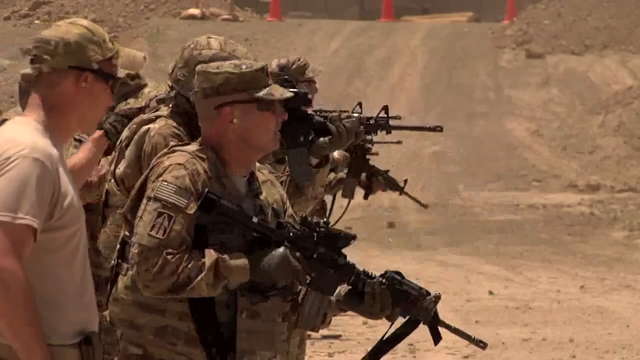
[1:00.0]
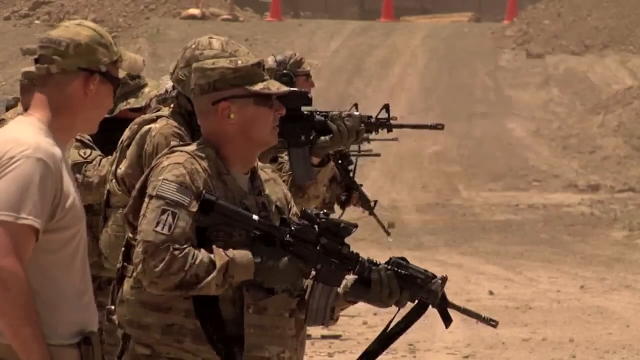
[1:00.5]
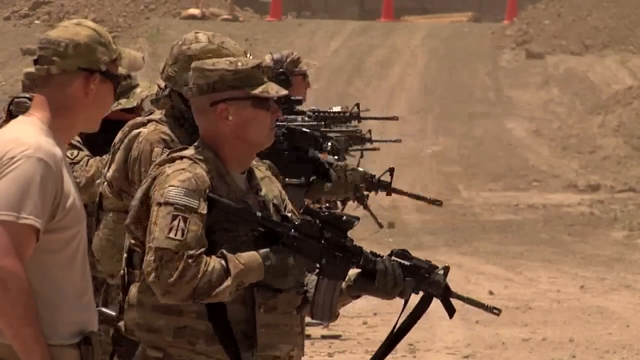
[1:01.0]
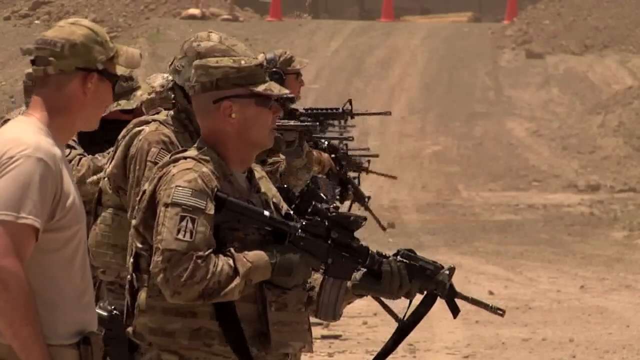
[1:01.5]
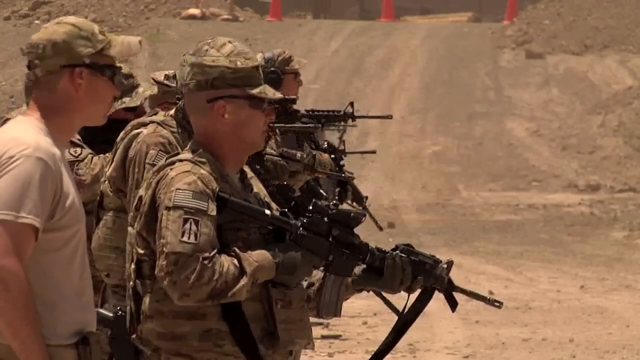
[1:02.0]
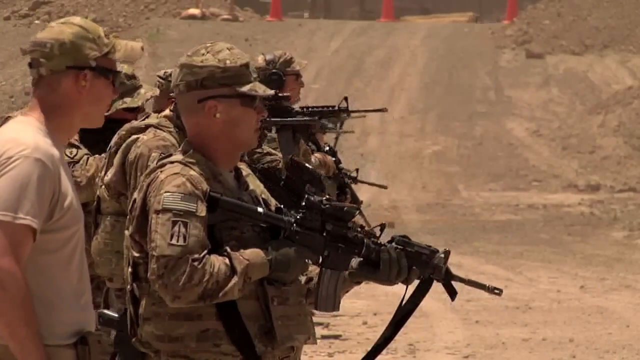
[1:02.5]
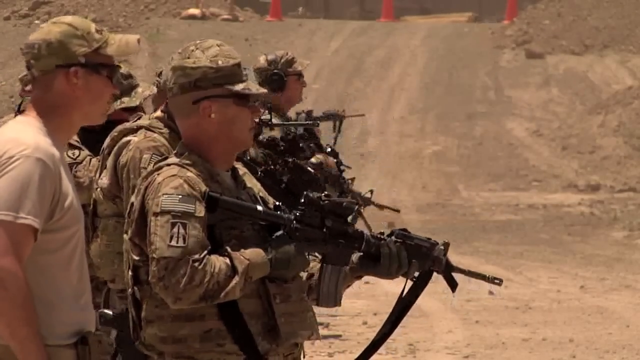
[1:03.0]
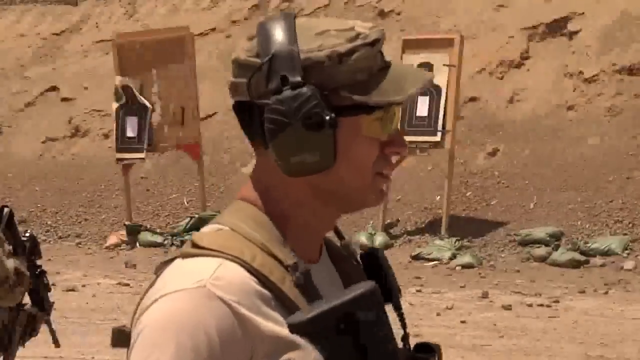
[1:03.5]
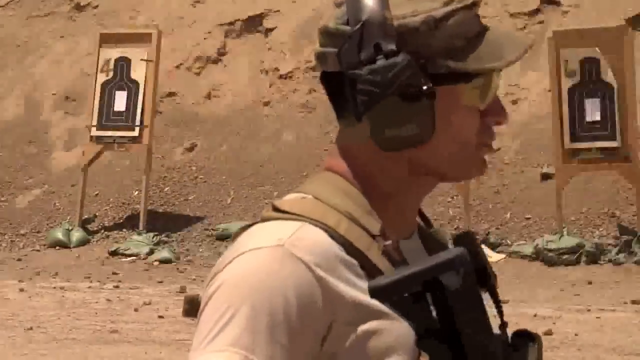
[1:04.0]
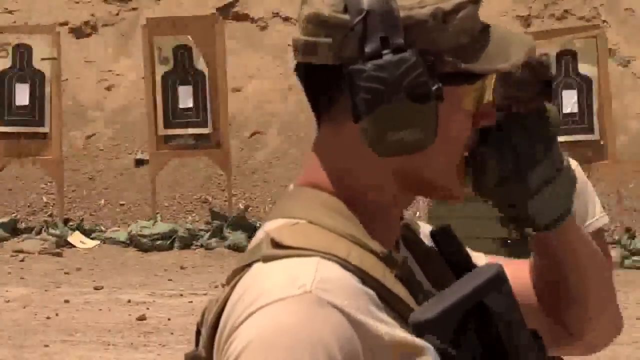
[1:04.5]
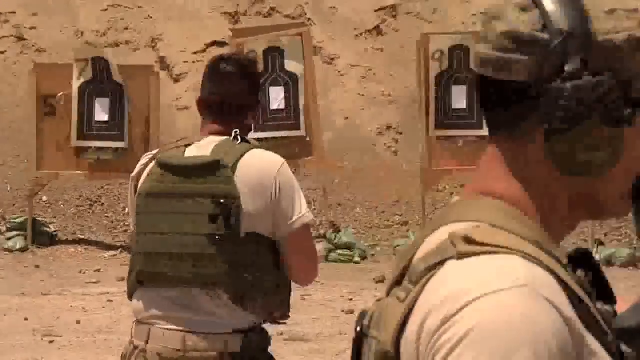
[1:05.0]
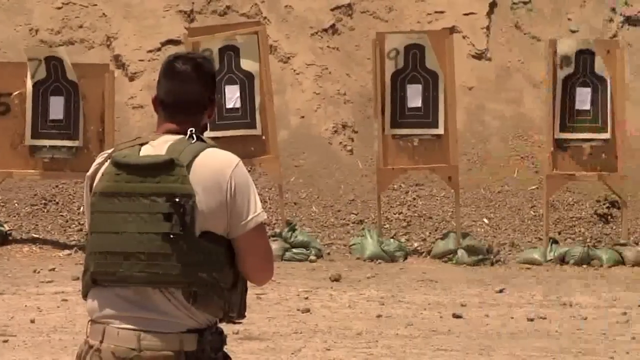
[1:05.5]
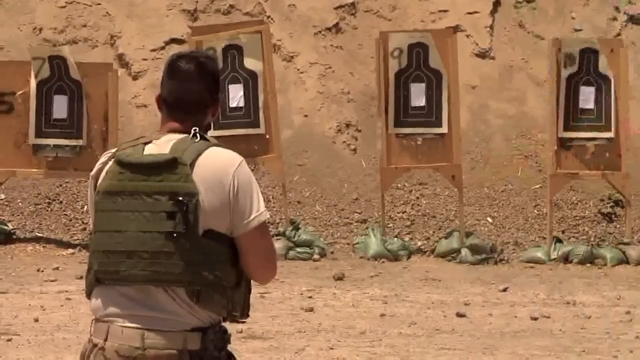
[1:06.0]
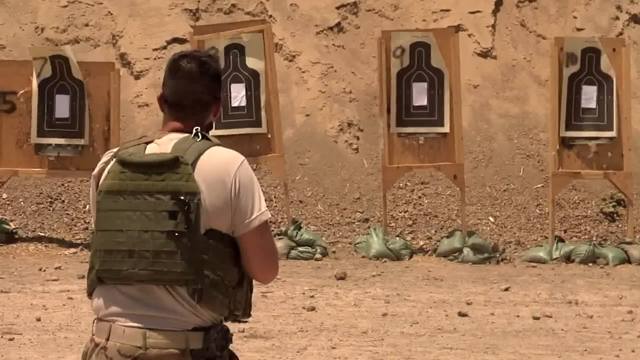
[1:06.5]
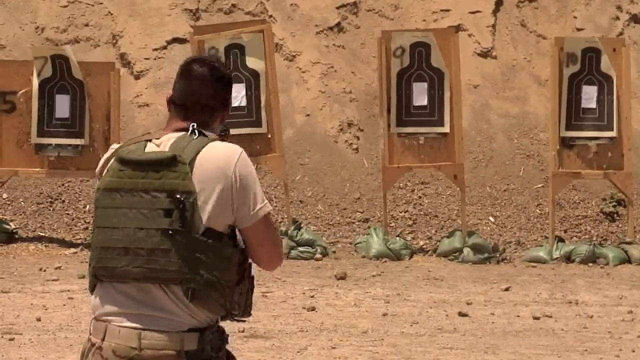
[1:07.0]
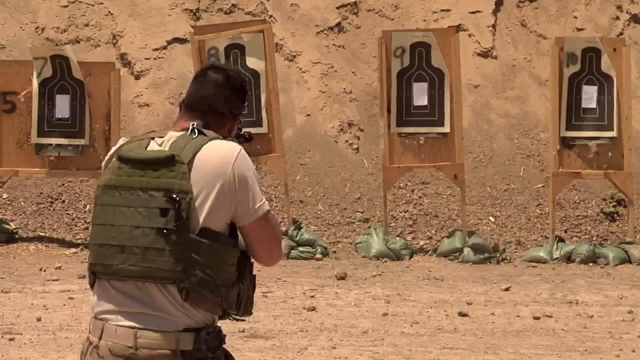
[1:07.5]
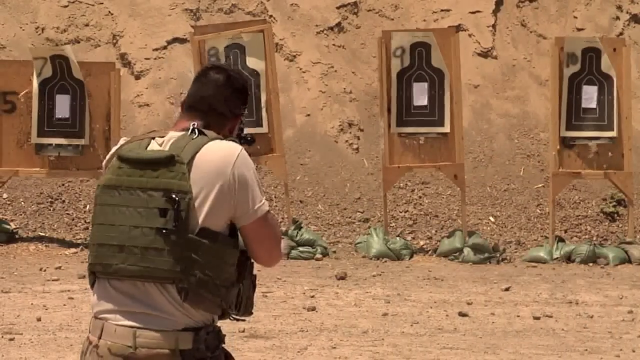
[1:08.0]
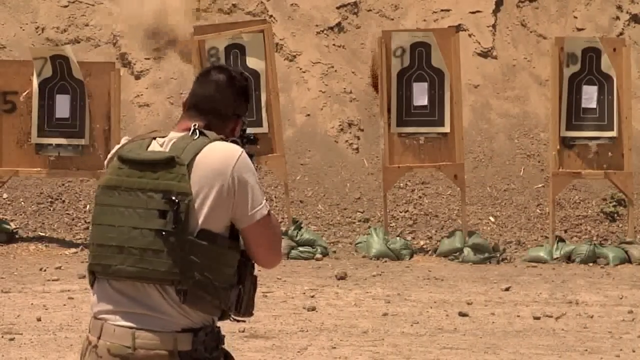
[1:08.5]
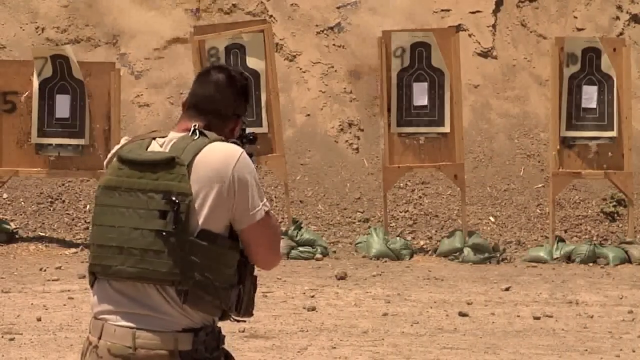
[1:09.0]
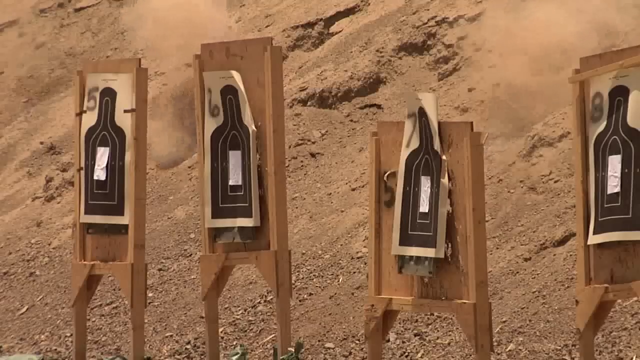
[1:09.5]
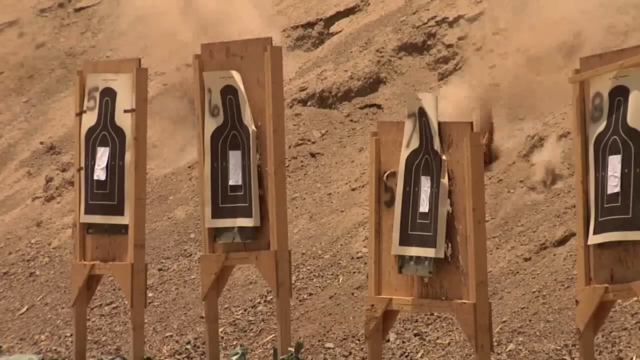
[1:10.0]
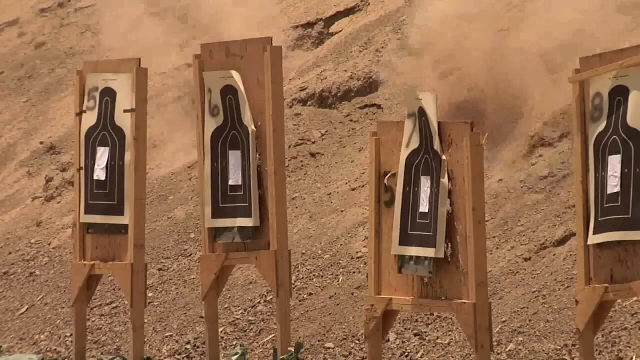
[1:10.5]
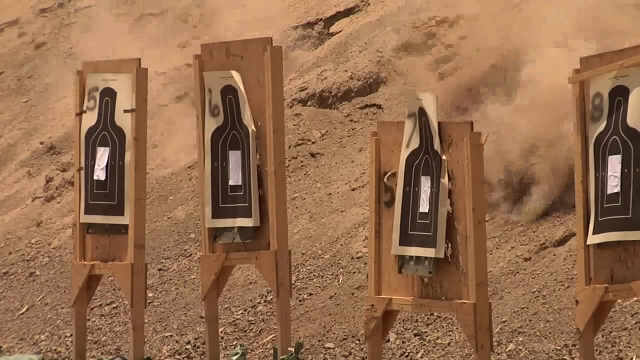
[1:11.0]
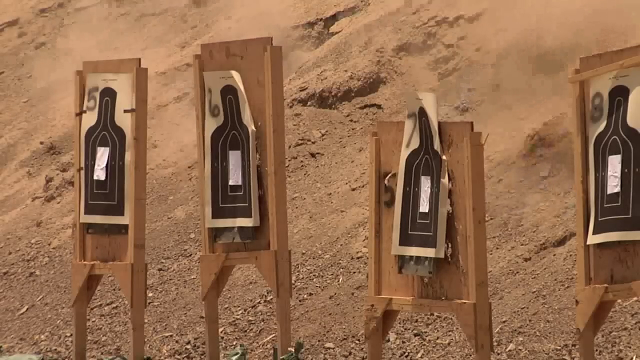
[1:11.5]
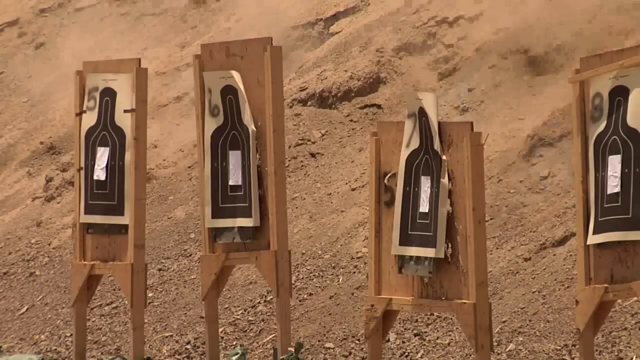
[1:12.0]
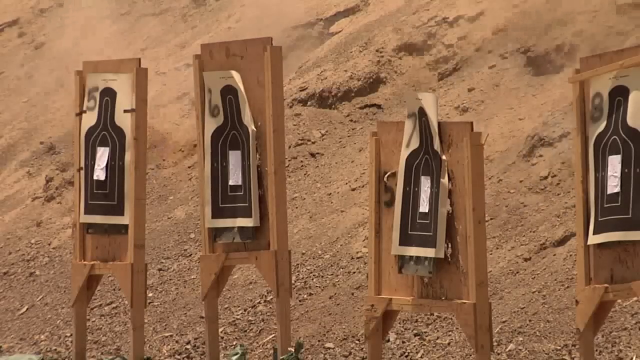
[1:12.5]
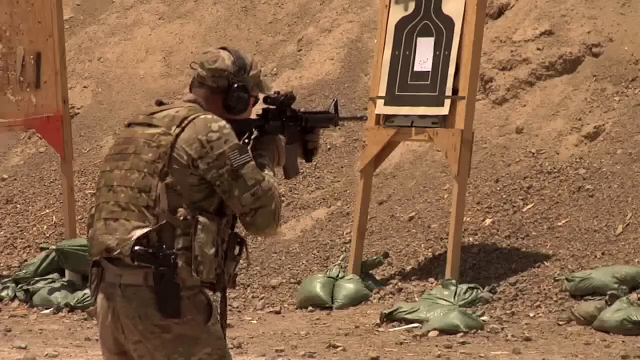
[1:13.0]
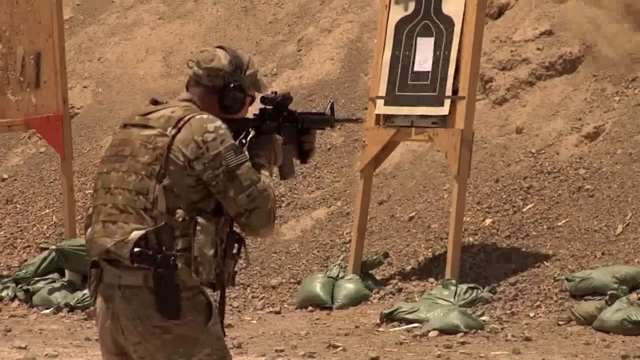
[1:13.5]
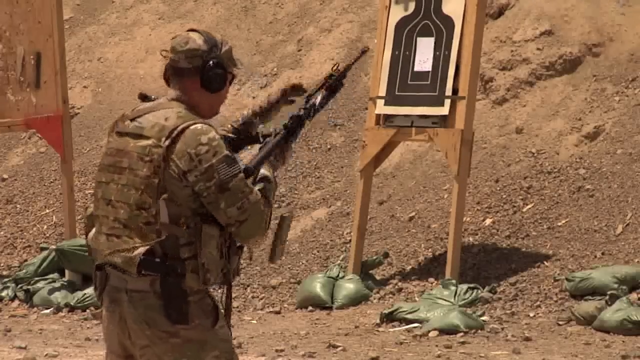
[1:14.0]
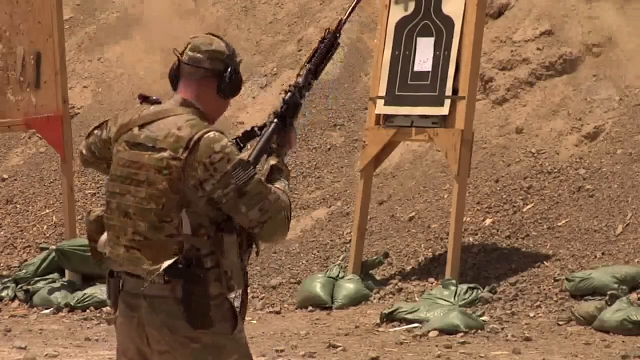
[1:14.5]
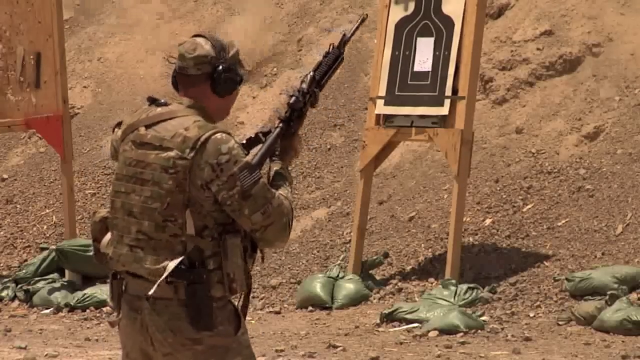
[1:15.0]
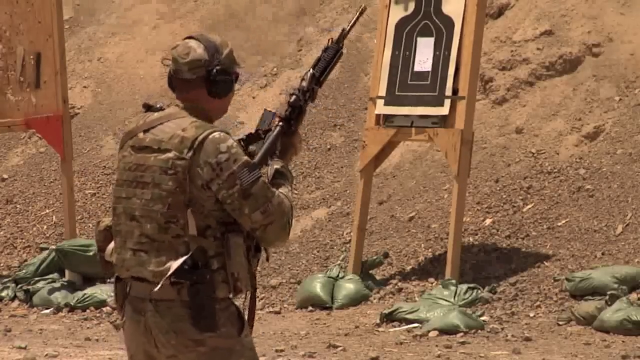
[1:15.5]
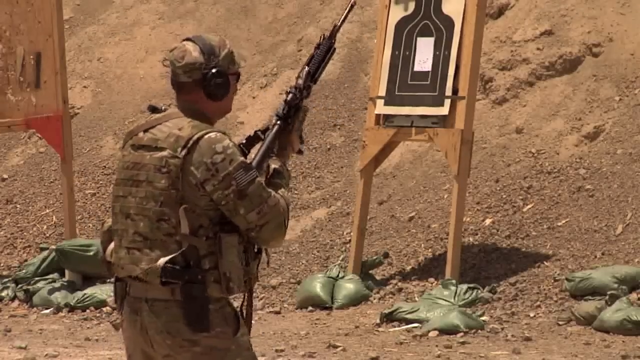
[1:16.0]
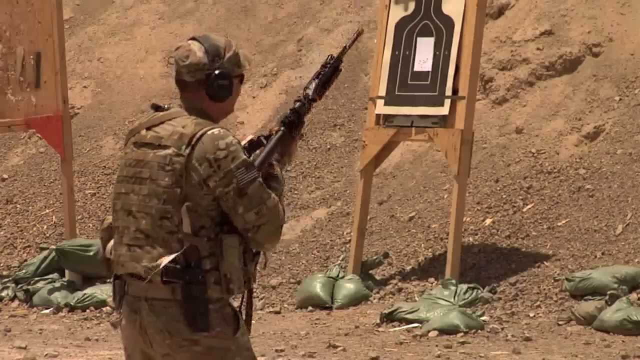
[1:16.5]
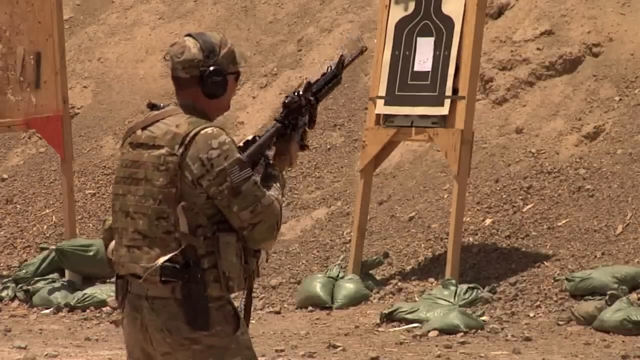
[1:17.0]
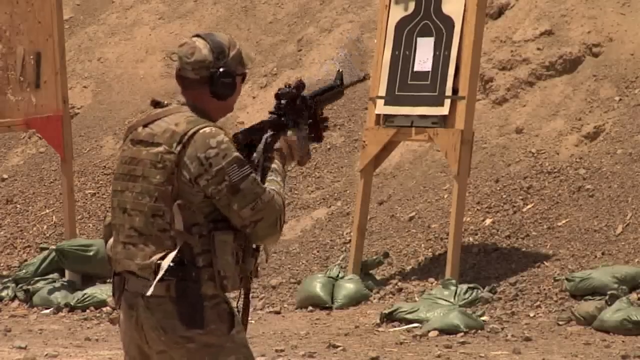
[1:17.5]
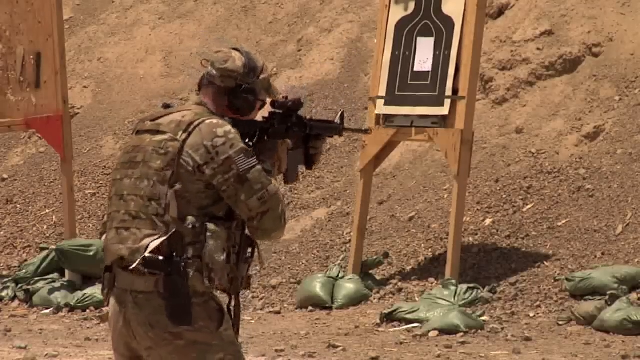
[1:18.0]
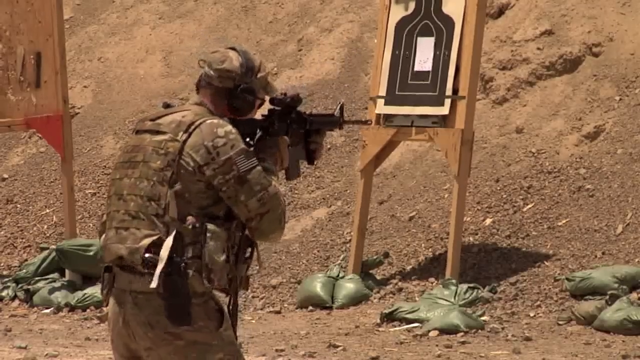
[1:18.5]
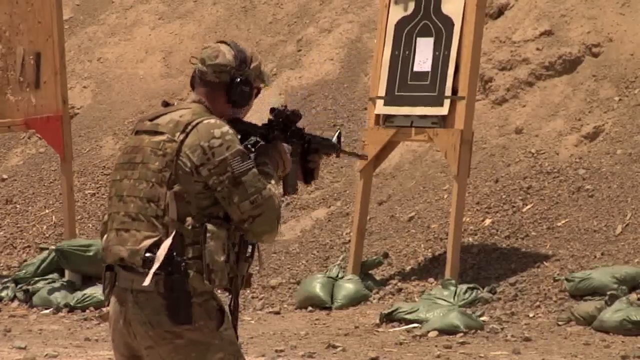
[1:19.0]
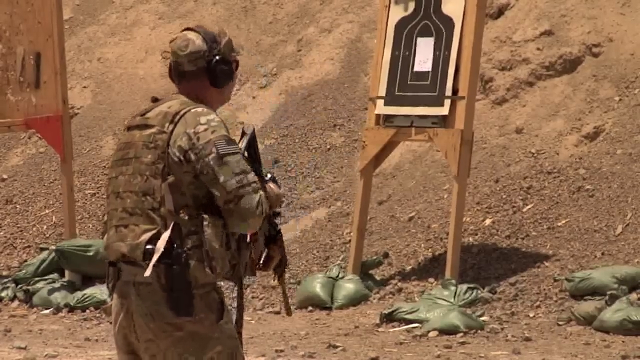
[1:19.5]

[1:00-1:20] The soldiers continue their target practice while an officer walks up and down, observing them as they fire their rifles. There is lots of smoke and dust in the air, some from the guns being fired and some from the dry, dusty ground. Large piled-up rocks are in the distance, and lots of rocks and stones lie on the ground; the conditions are very dry, hot and humid. The soldiers wear thick boots for the very uneven, stony, dry ground. Three red warning cones have been placed on top of a hill, apparently to cordon off the area around the target practice.